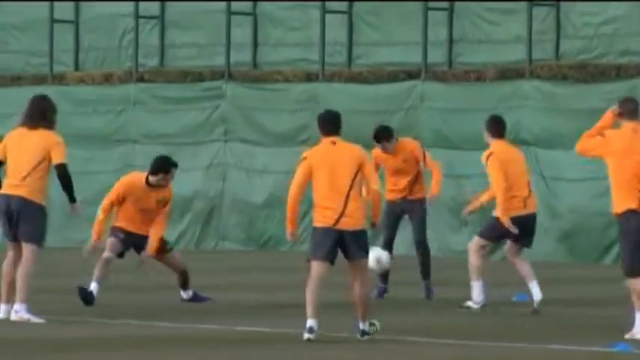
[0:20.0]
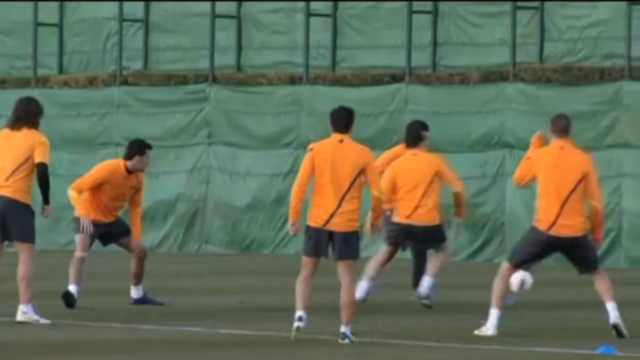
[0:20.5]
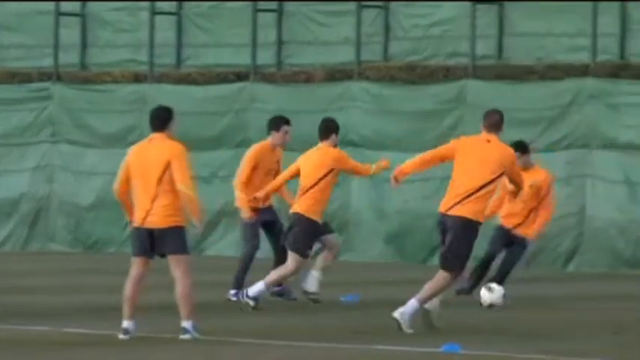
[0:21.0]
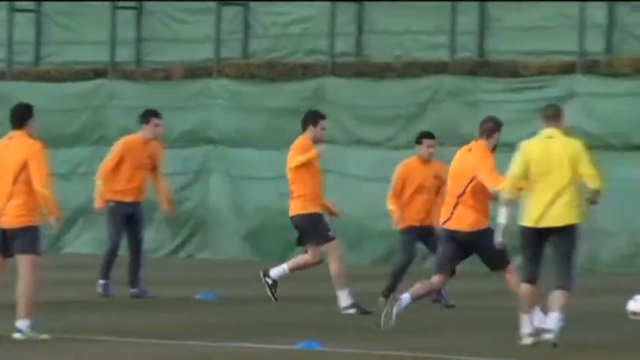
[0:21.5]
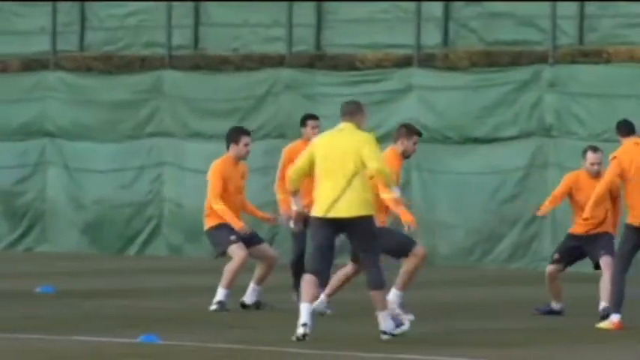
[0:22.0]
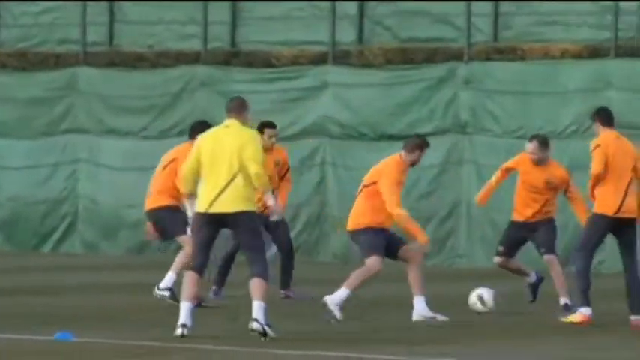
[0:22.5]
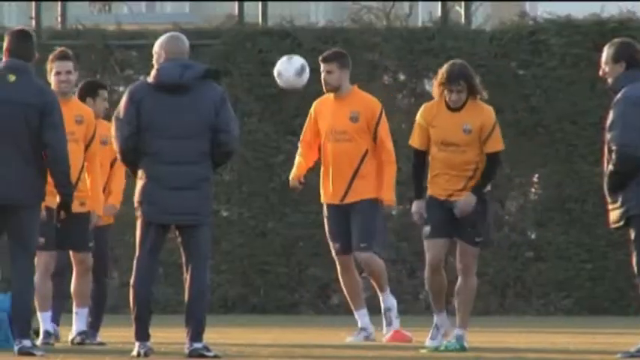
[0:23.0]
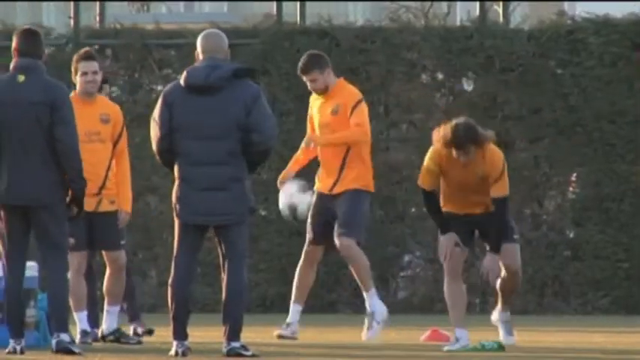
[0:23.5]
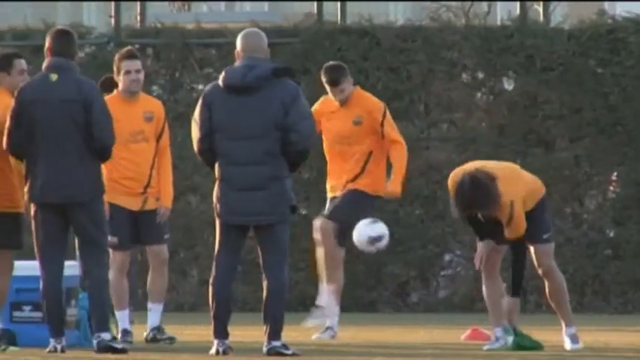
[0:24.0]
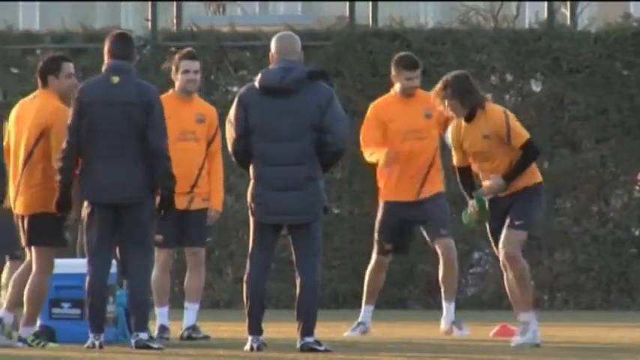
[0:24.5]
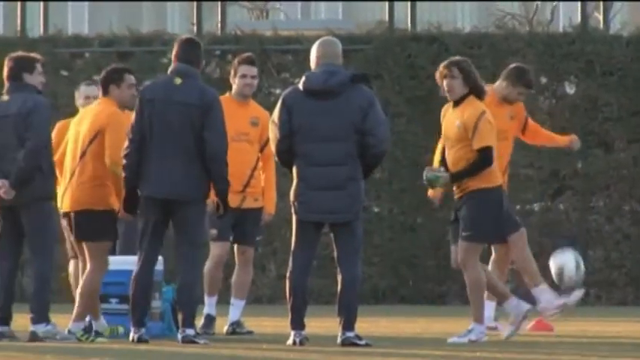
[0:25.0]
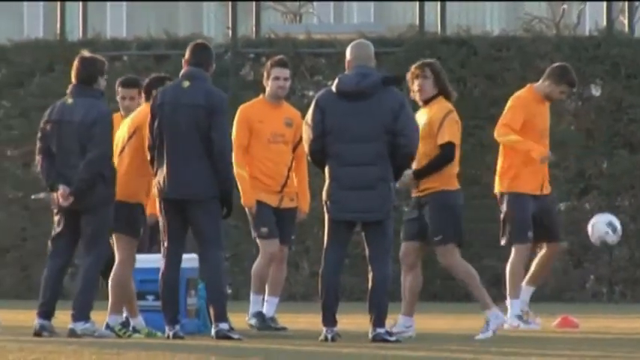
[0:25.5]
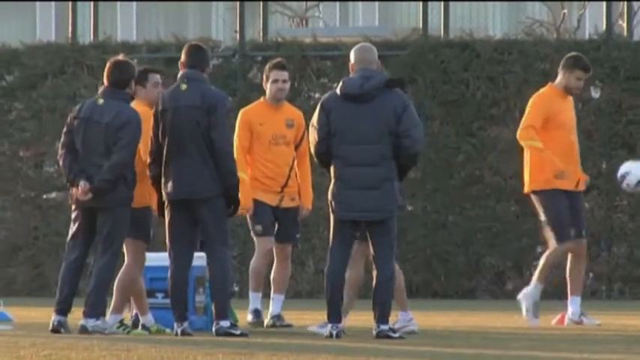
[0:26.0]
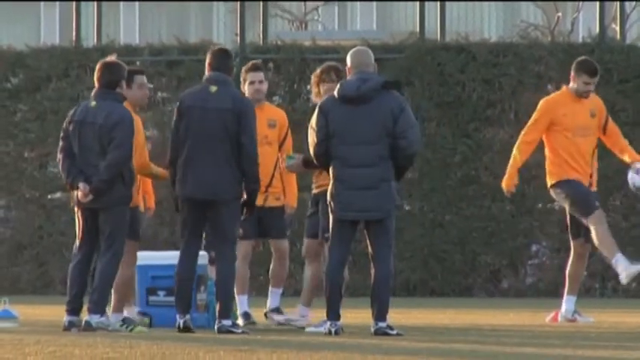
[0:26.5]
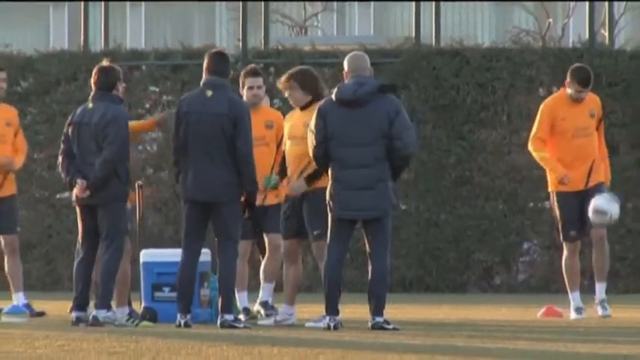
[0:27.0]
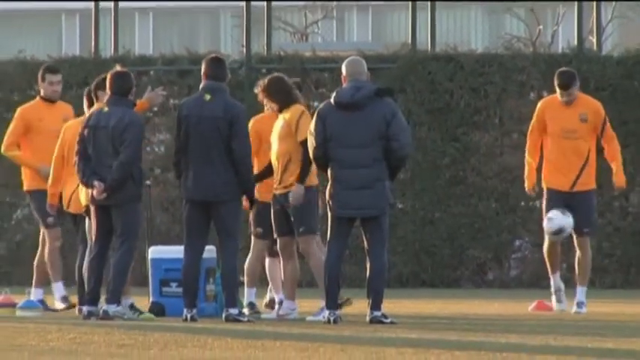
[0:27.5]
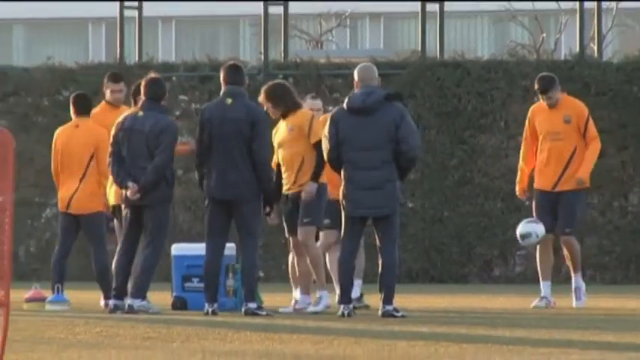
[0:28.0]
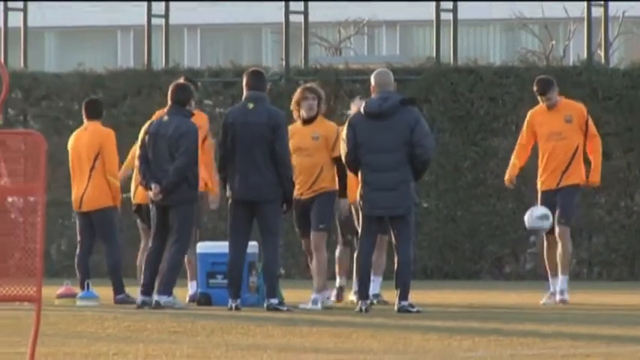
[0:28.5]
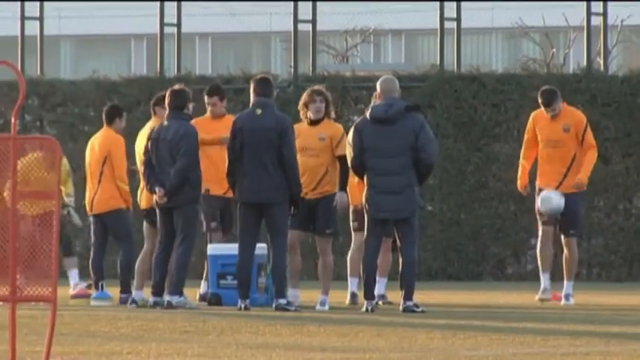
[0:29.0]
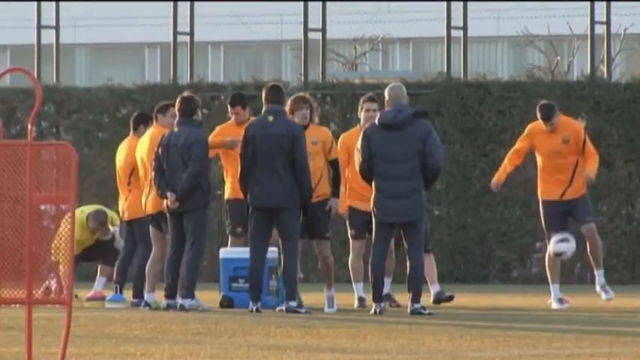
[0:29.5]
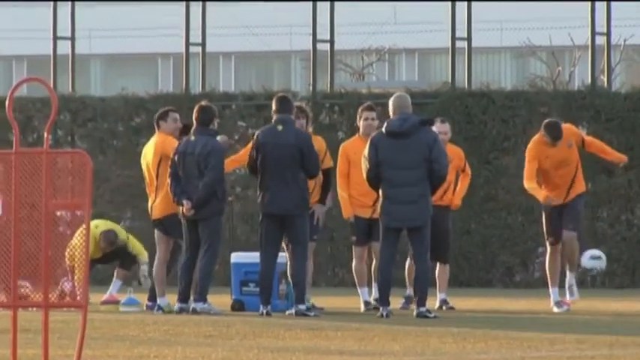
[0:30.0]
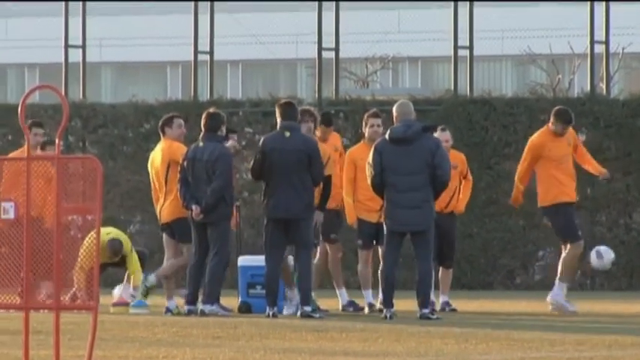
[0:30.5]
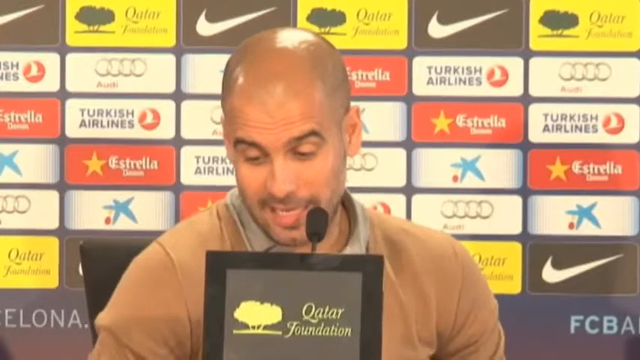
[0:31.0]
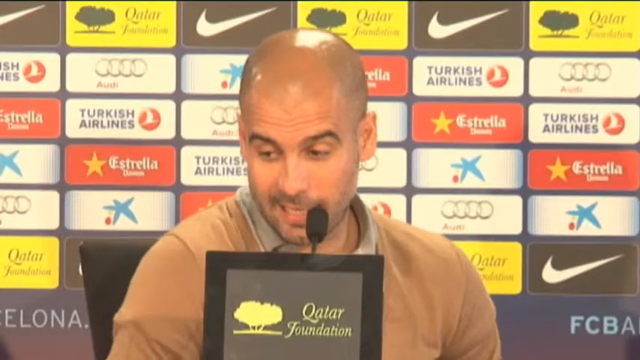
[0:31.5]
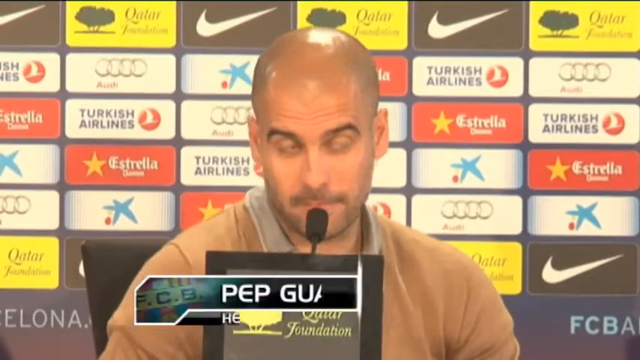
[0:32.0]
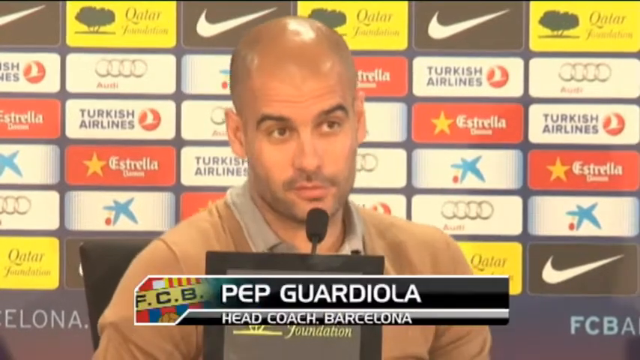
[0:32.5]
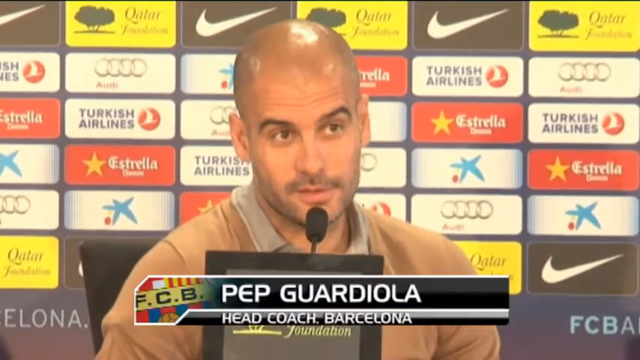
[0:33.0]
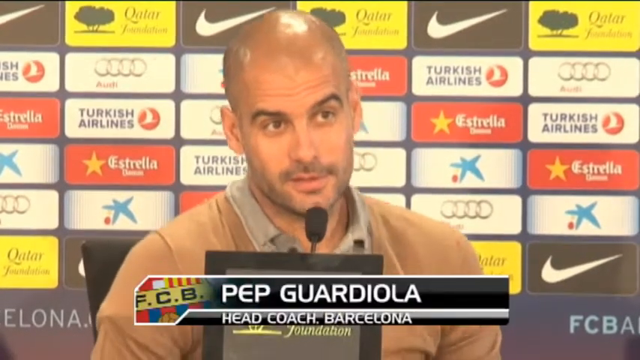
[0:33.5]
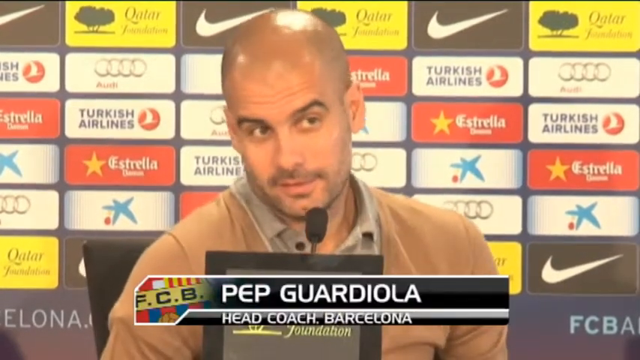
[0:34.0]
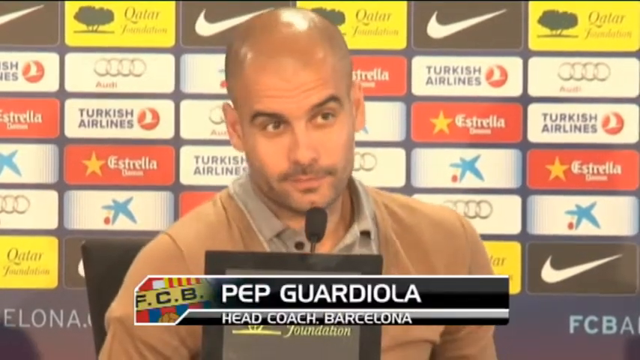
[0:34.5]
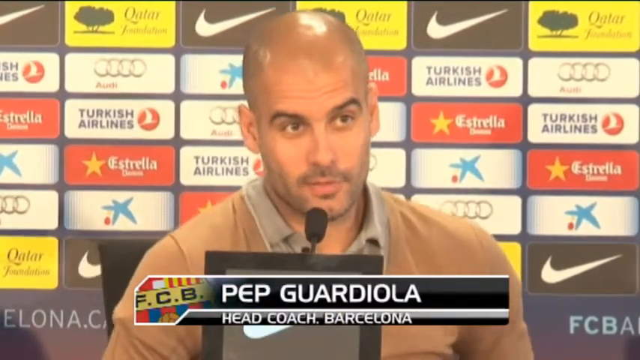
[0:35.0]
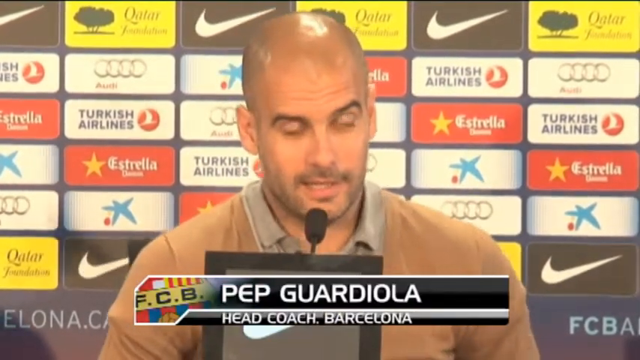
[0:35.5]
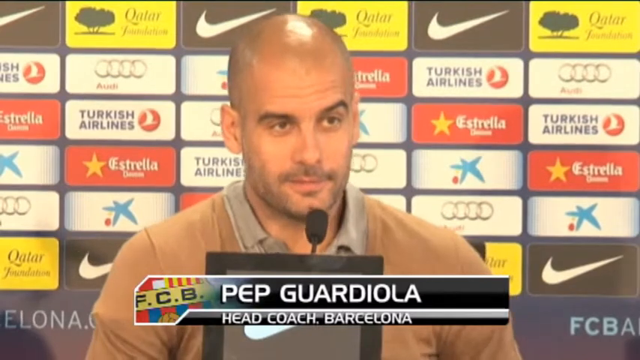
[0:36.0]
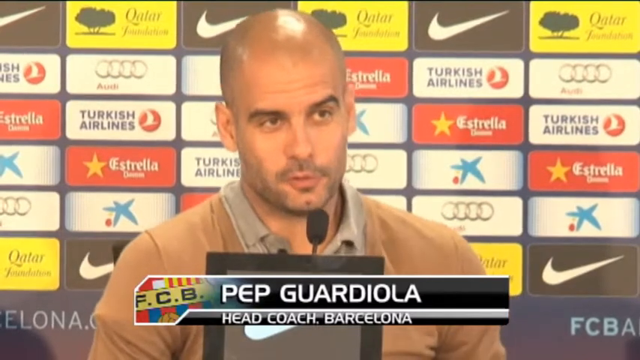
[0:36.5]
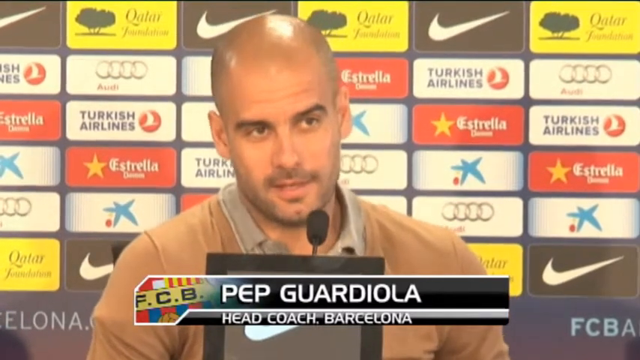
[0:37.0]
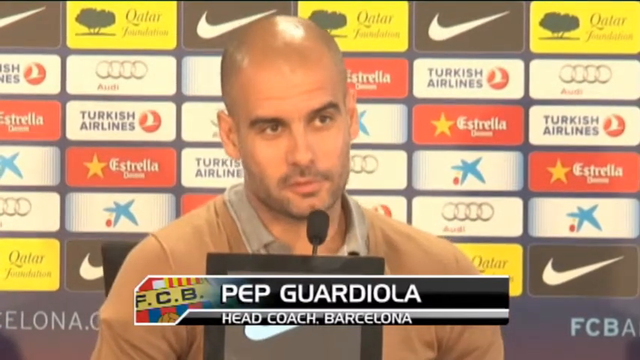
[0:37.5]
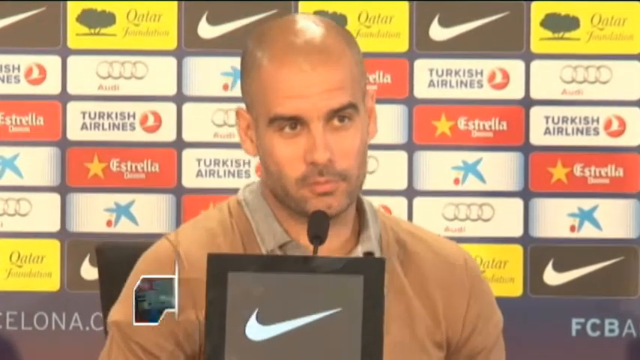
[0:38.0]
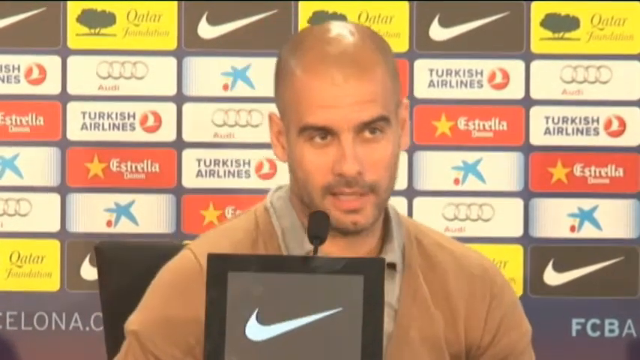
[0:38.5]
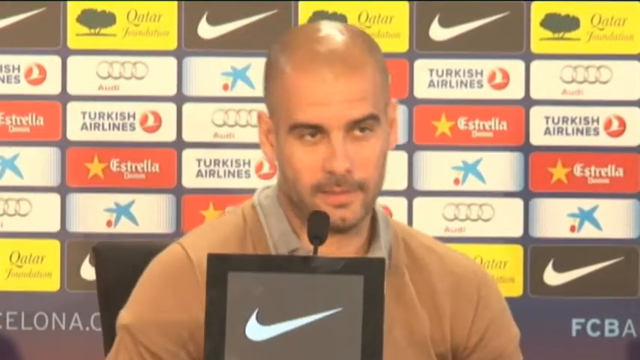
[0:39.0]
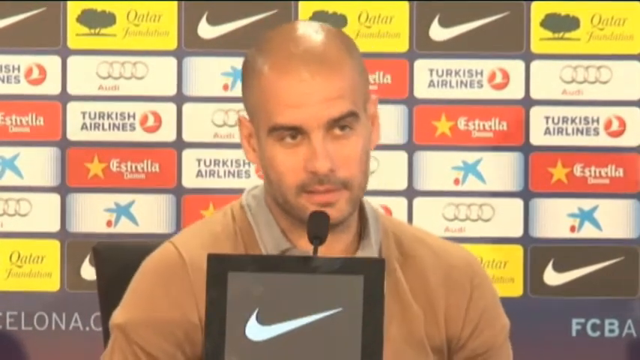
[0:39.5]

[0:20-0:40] Seven or eight players in orange jerseys continue the practice drill in the background. Behind them is a green wall, a wall with a green tarp that looks like it has been overlaid onto it; this is the bottom of the spectator stands, which are visible above and are also covered in a green tarp. The shot cuts to some players, one with long hair, conversing with coaches on the sideline. A blue cooler is in the middle of the group on the left of the screen, and there is a red practice dummy, a sort of practice cage used in soccer drills for kicking around. The video then cuts to a news conference with the head coach of FC Barcelona, Pep Guardiola, who speaks in front of a sponsorship panel bearing a number of logos, including Qatar, Audi, Turkish Airlines, Estrela Beer and Nike. A graphic shows Pep Guardiola's name and reads "head coach Barcelona". He is seated at a podium with a Nike logo on the screen in front of him, speaking into a small microphone.